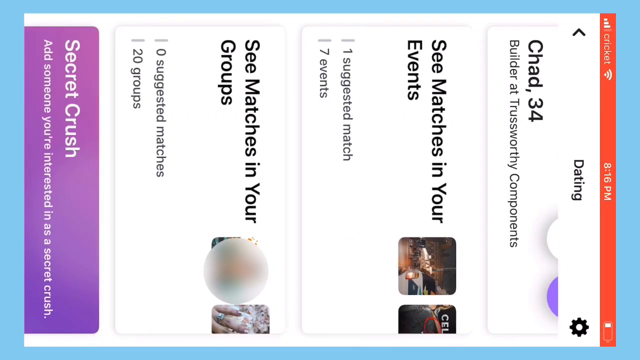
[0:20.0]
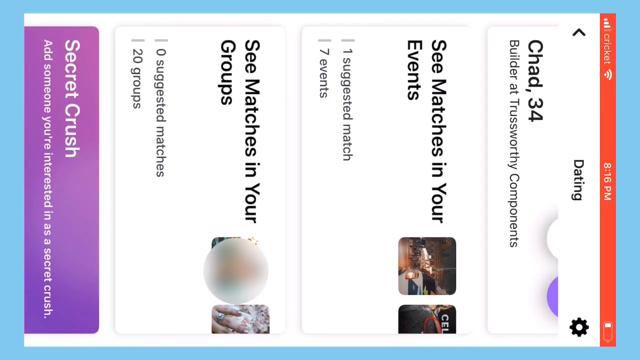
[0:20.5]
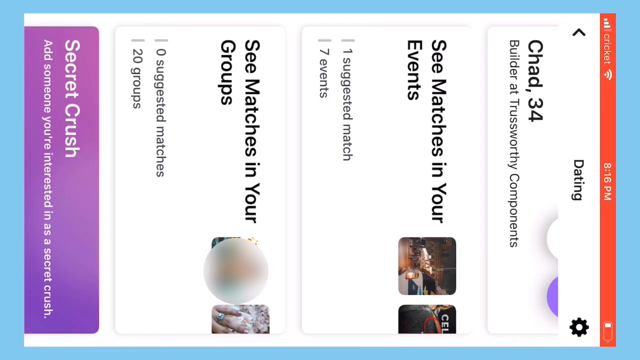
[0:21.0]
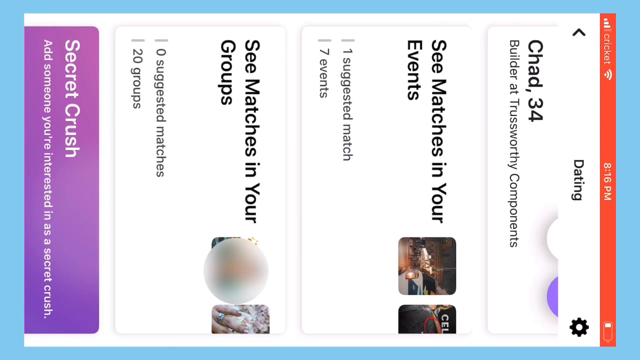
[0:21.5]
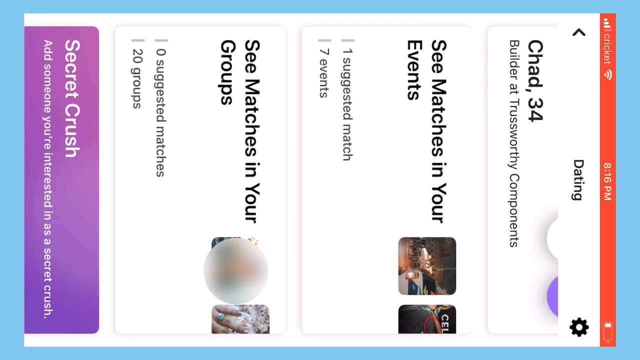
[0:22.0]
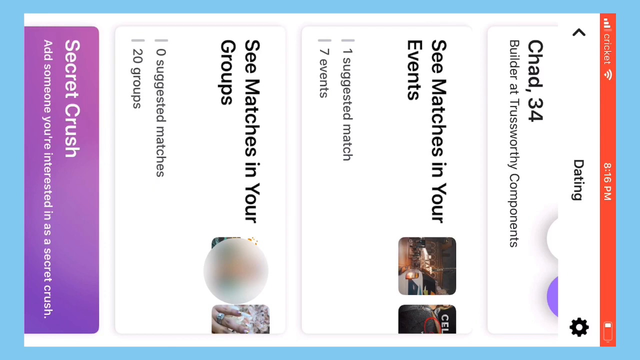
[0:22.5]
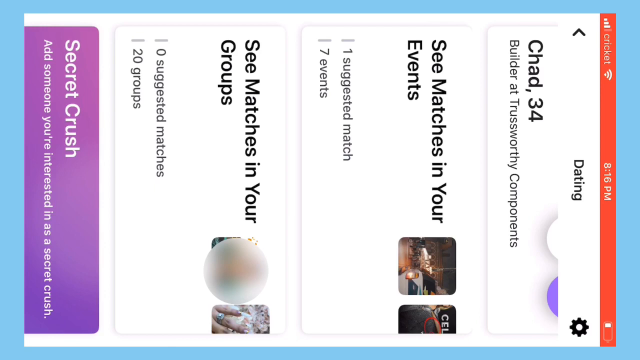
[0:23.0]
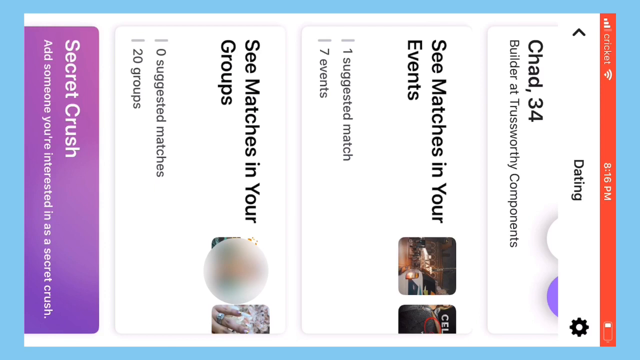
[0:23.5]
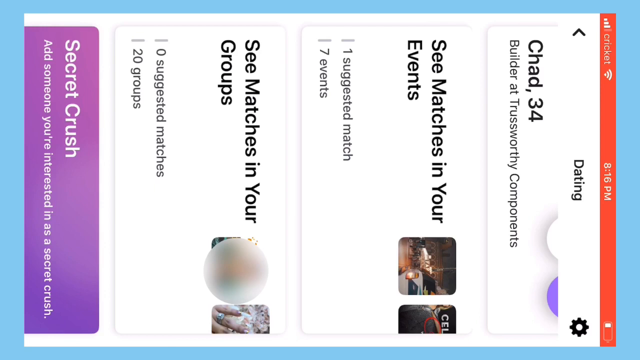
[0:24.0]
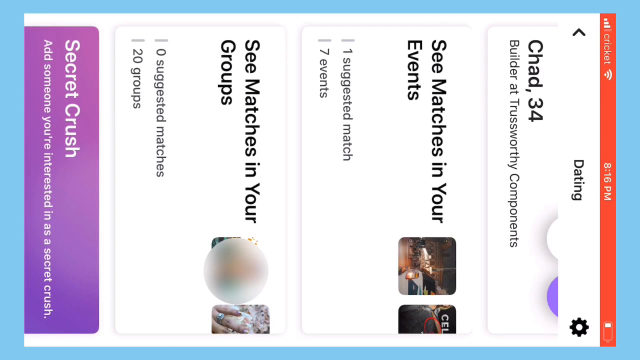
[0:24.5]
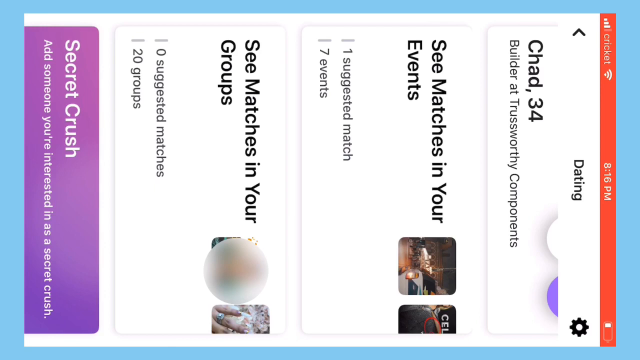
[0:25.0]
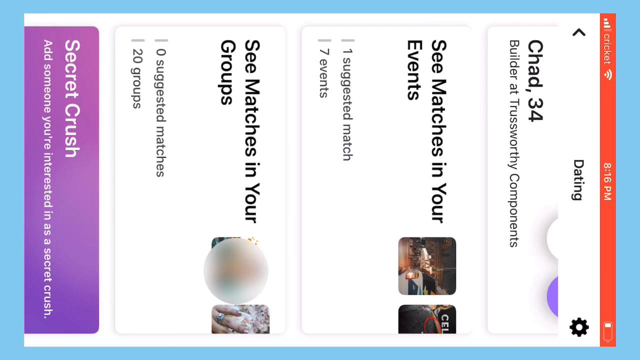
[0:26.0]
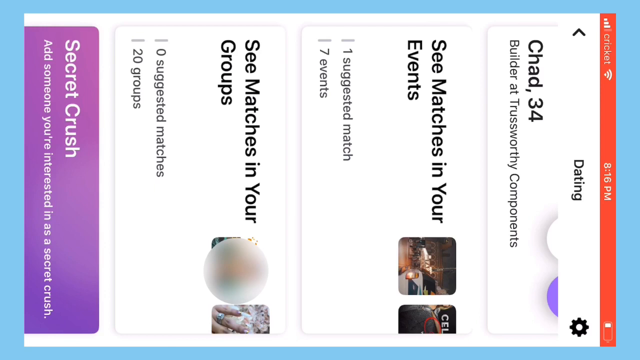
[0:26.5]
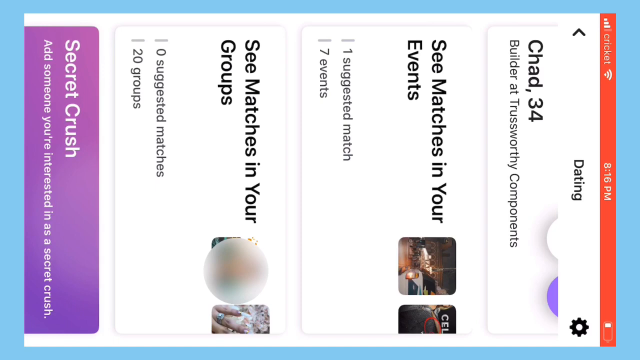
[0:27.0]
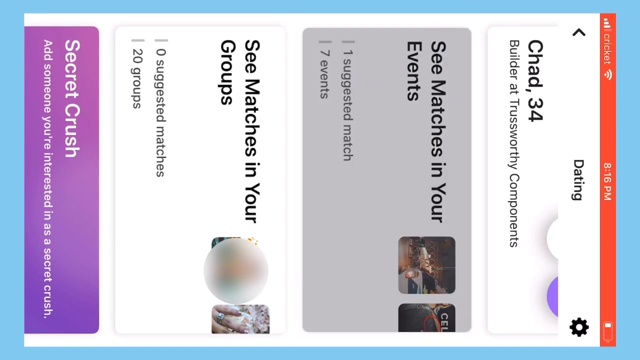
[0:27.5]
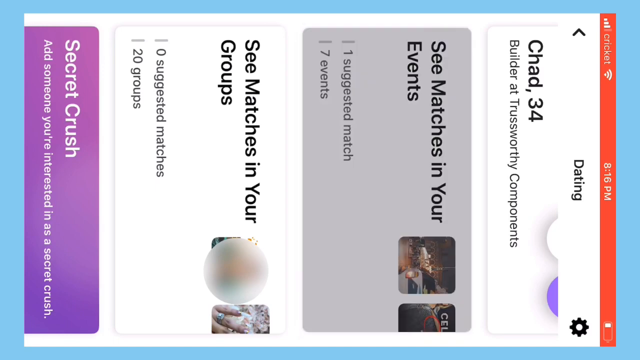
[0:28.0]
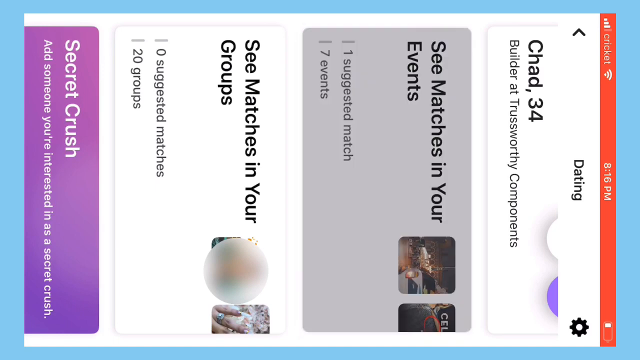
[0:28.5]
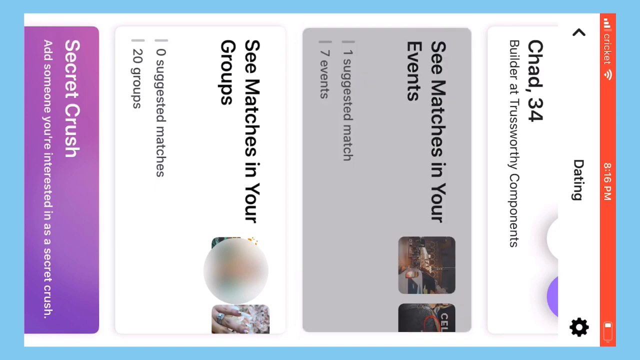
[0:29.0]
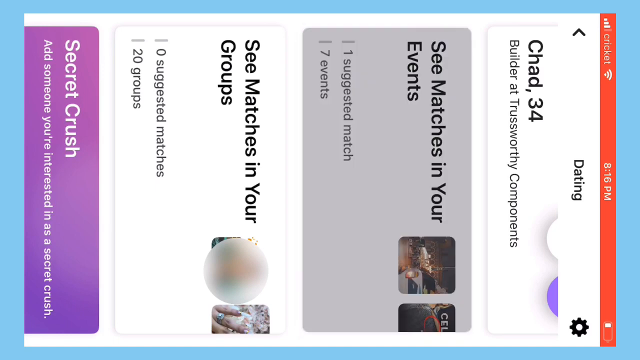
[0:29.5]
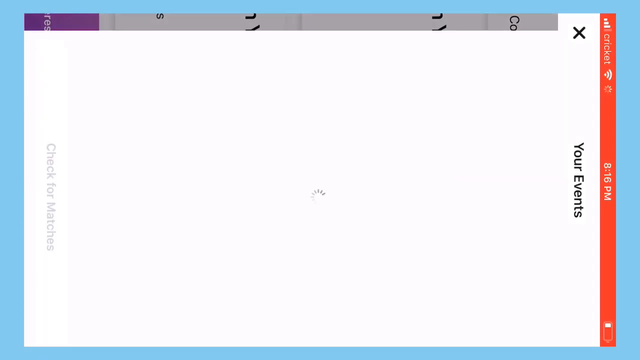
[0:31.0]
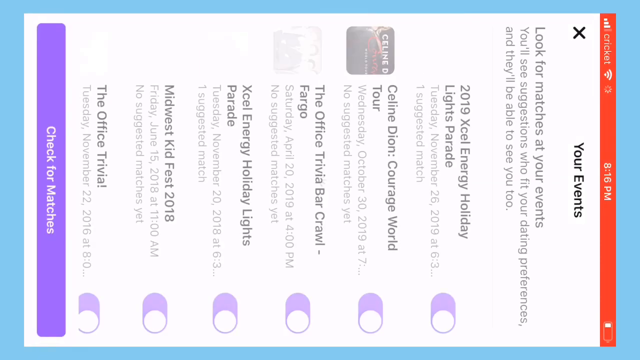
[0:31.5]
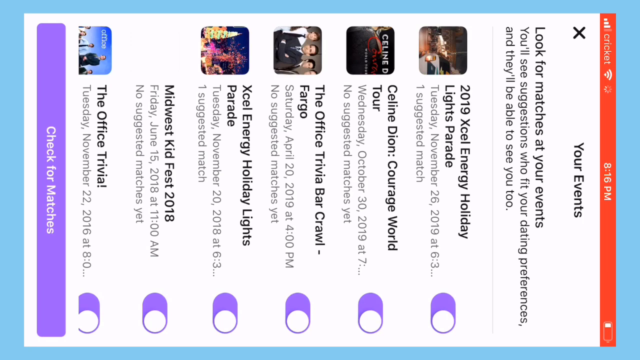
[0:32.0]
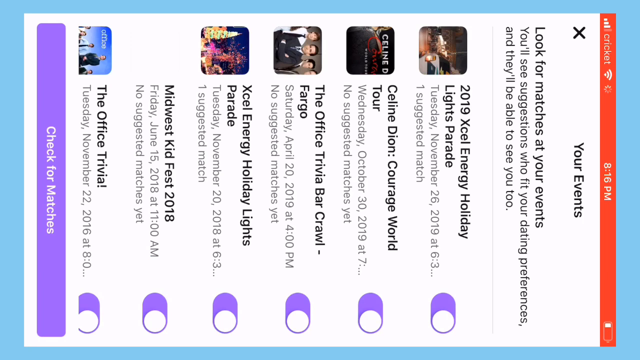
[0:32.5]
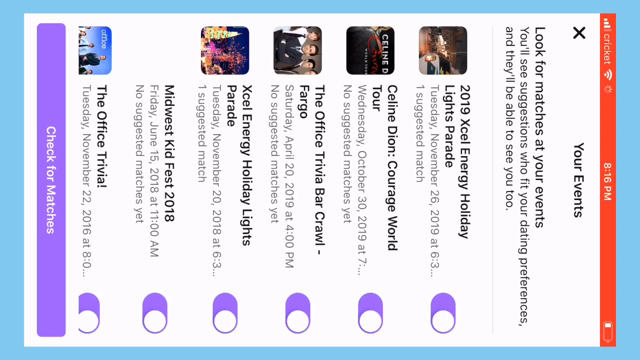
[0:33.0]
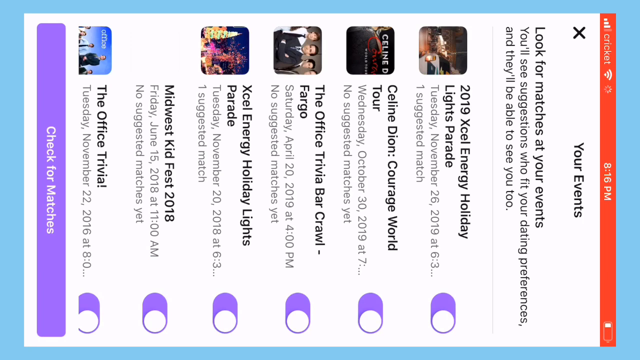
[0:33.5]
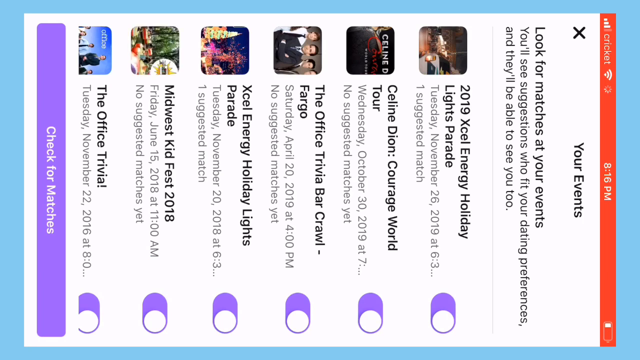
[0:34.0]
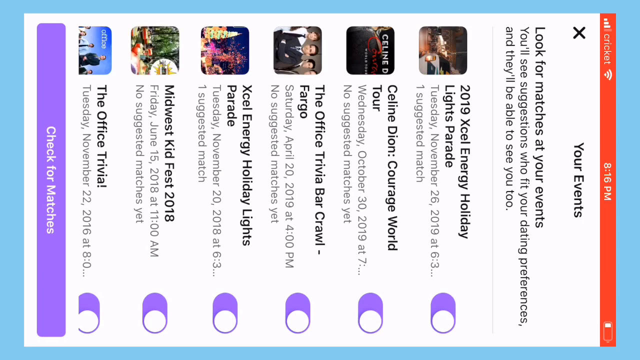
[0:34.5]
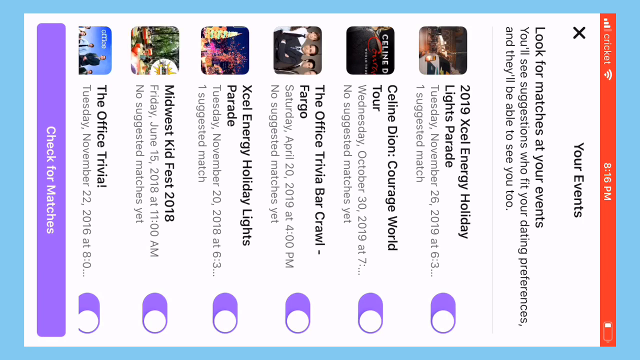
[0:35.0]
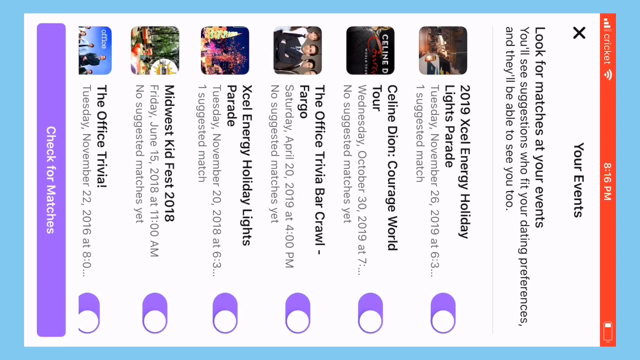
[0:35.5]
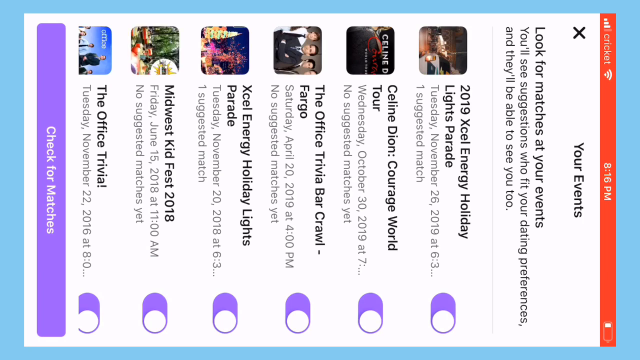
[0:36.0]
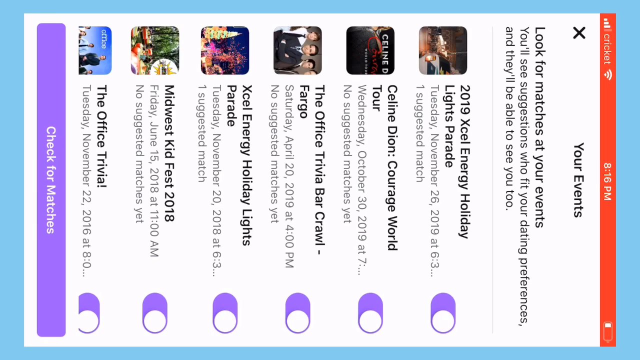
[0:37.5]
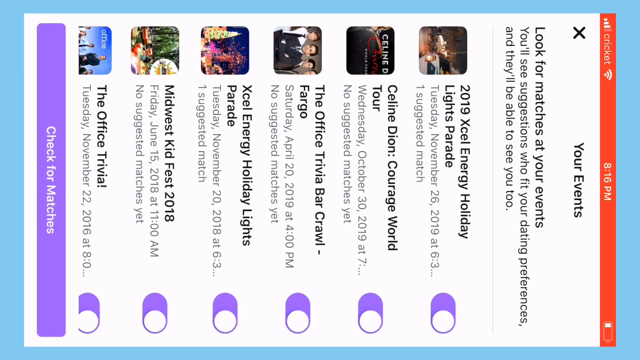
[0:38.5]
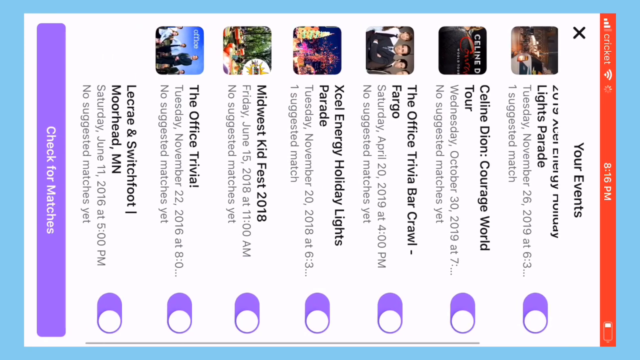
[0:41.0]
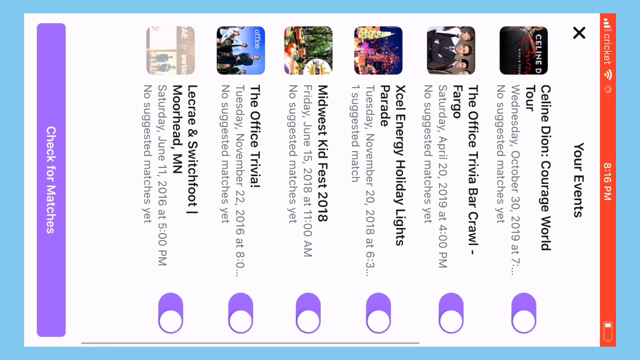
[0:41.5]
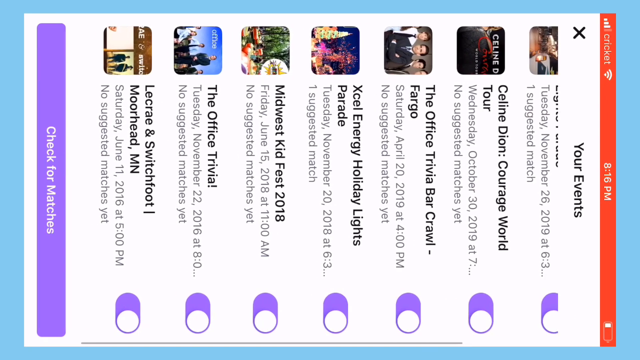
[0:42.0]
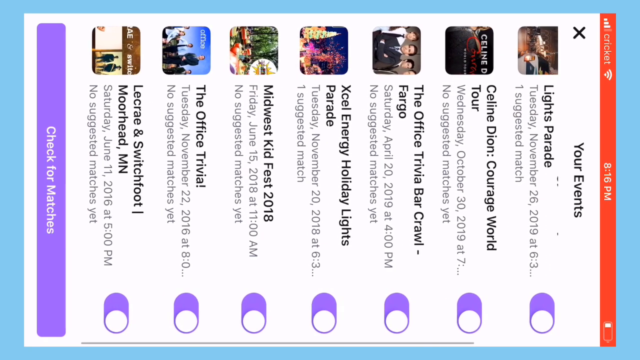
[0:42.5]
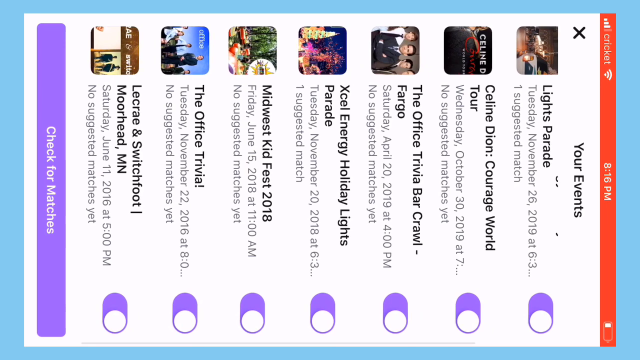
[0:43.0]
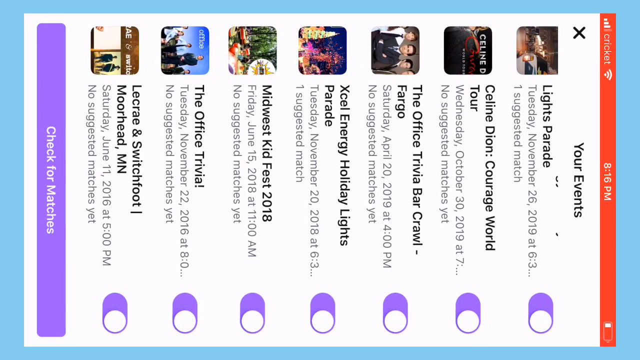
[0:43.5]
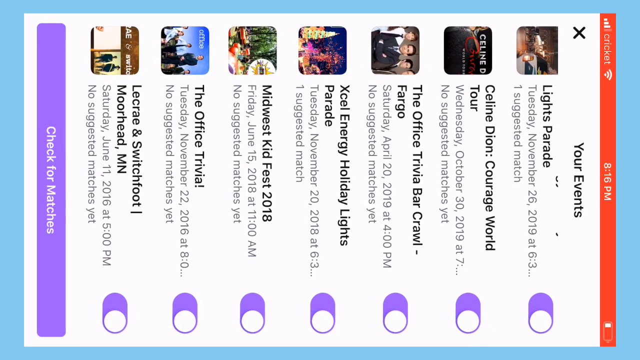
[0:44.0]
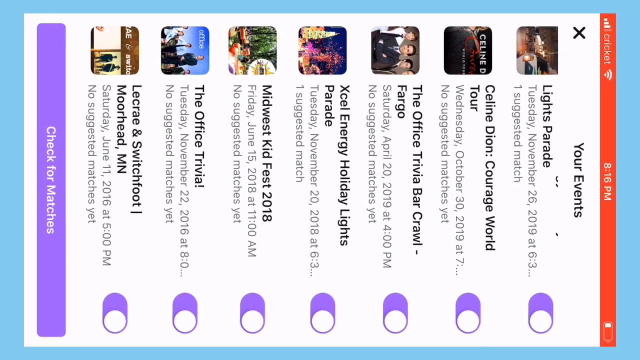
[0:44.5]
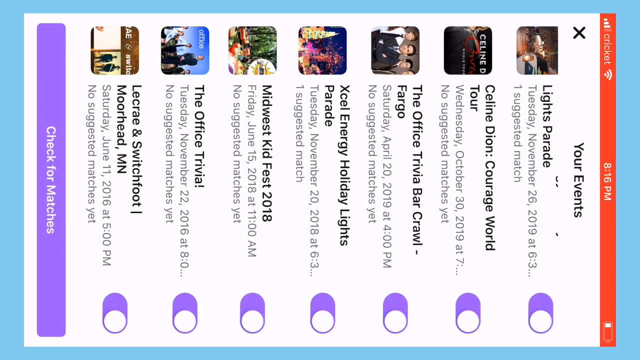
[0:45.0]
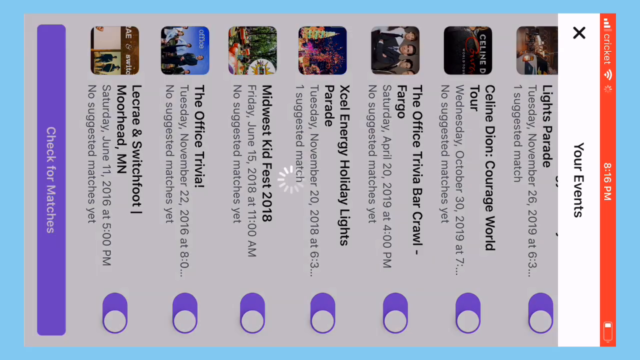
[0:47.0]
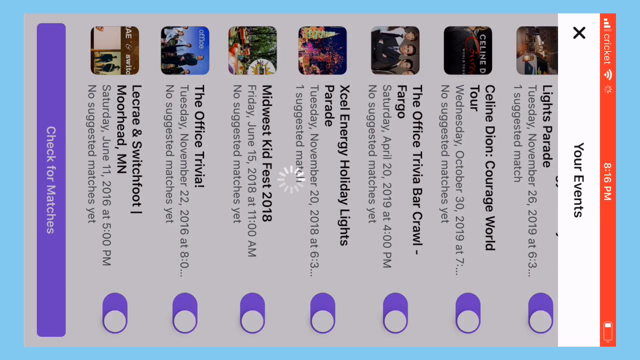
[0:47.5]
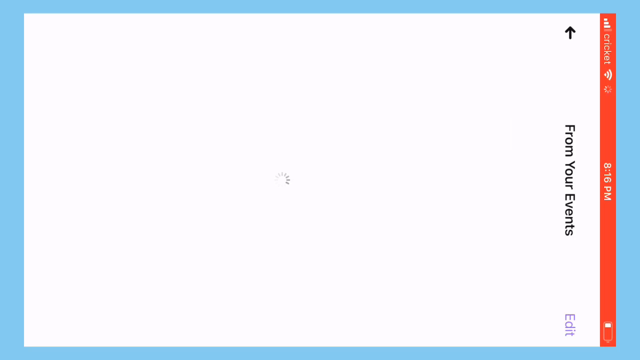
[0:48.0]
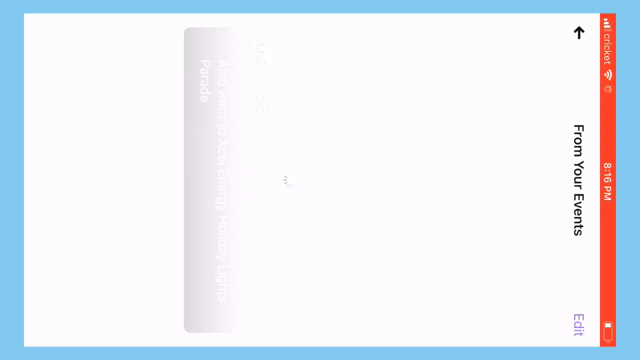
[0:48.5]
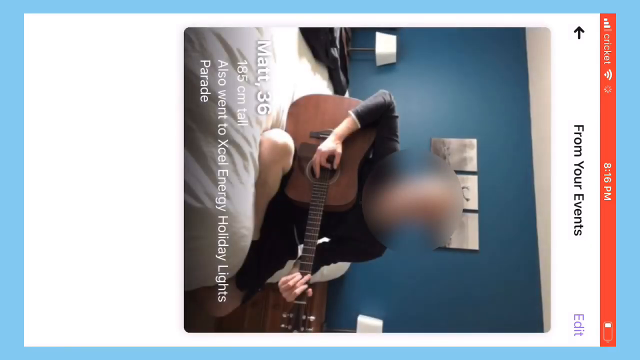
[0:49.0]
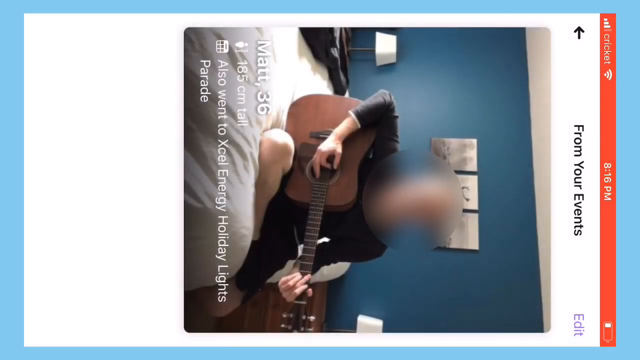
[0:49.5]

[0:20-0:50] A mobile phone screen grab recorded in portrait mode is tilted to the side so that the top is on the right side of the video, shown against a light blue background. "Cricket" appears at the top, with a time of 8.16 p.m. The screen reads "Dating," "Chad 34, builder at Trustworthy Components," "See matches in your events," "one suggested match, seven events," and "see matches in your groups," followed by photos that are blurred out. The section reading "matches in your events" is highlighted in gray. The screen then changes to a page reading "your events" and "Look for matches at your events. You'll see suggestions who fit your dating preferences and they'll be able to see you too." It then lists multiple different events associated with the profile being viewed.